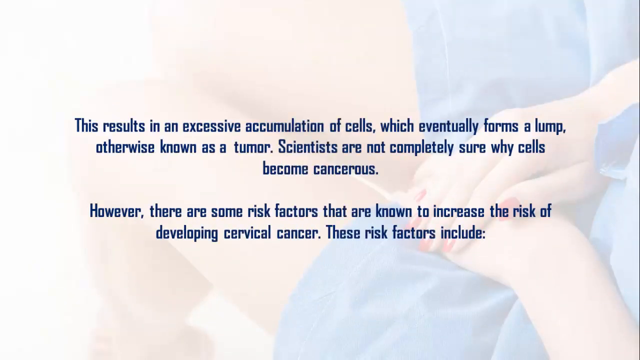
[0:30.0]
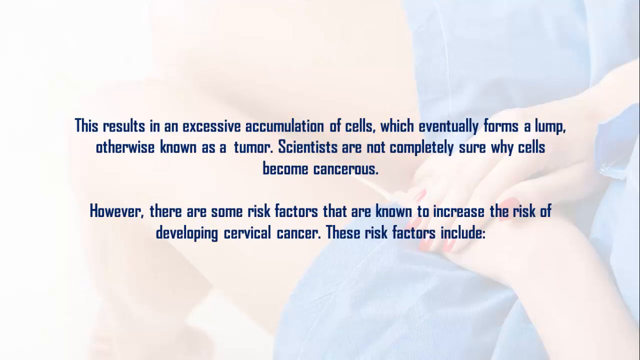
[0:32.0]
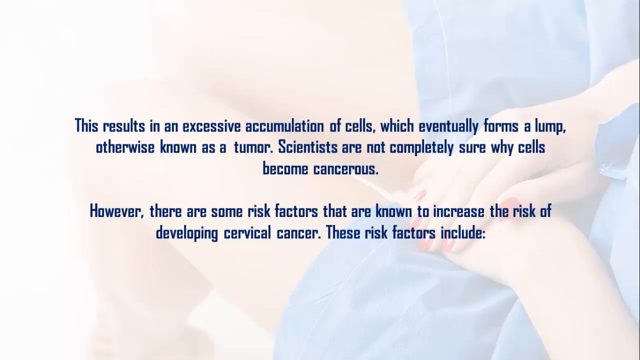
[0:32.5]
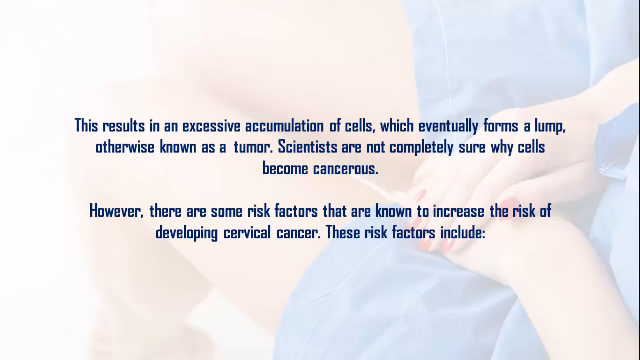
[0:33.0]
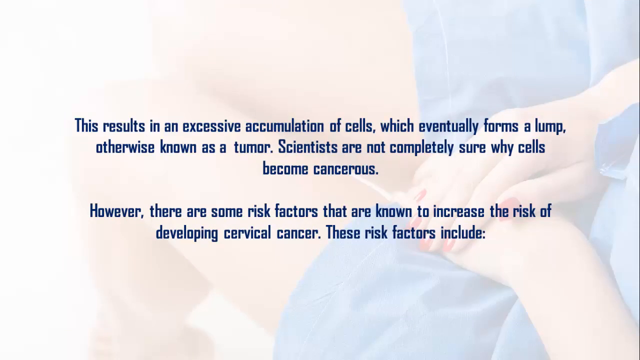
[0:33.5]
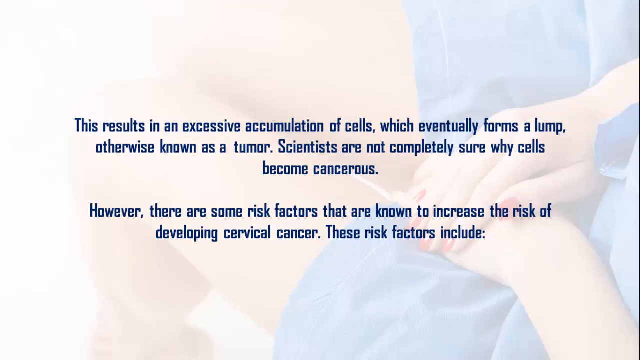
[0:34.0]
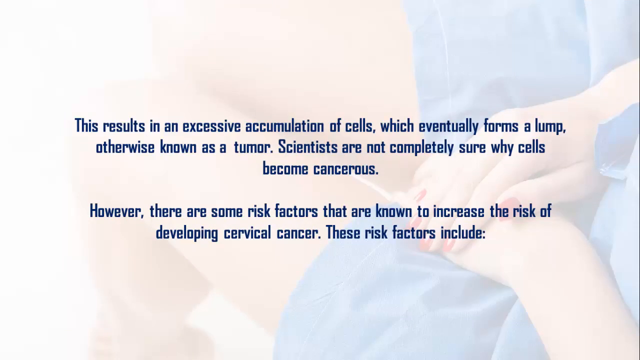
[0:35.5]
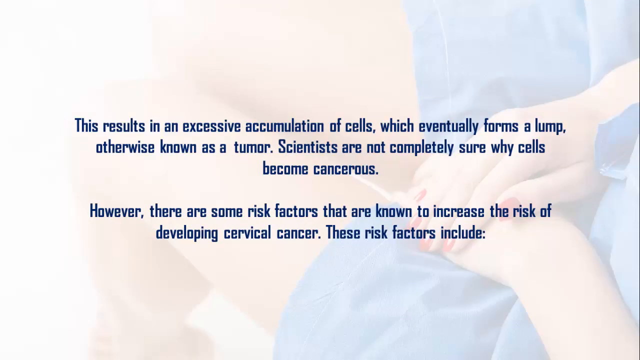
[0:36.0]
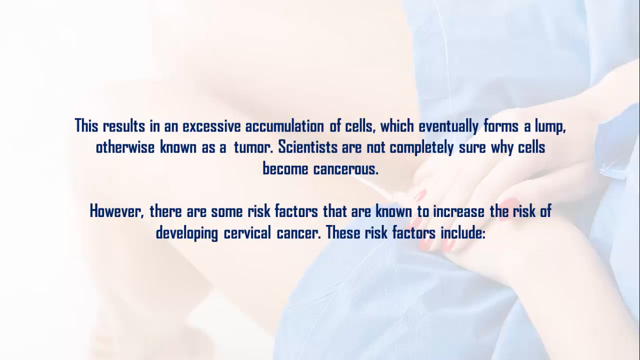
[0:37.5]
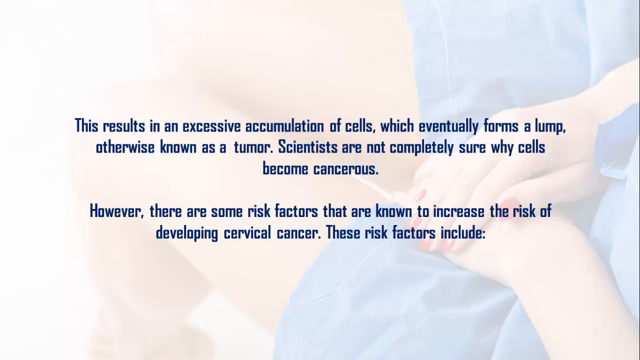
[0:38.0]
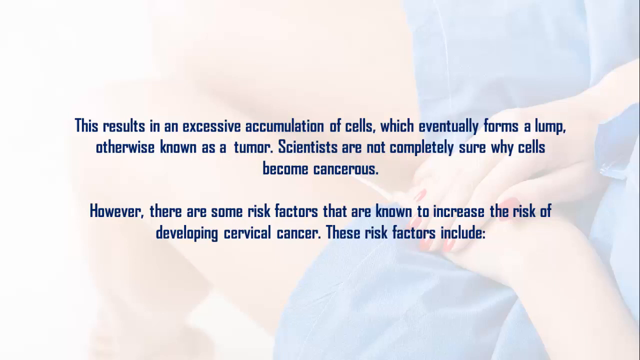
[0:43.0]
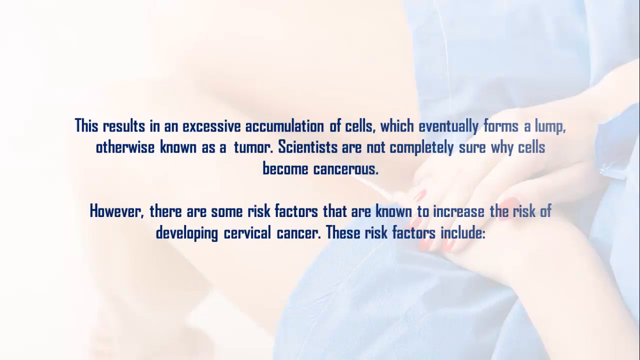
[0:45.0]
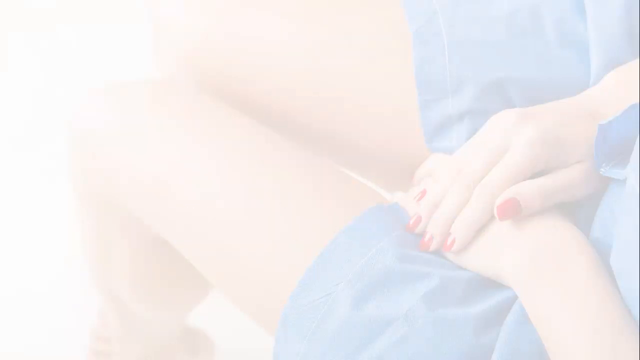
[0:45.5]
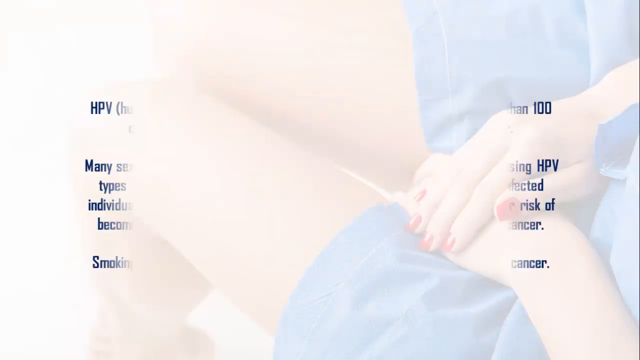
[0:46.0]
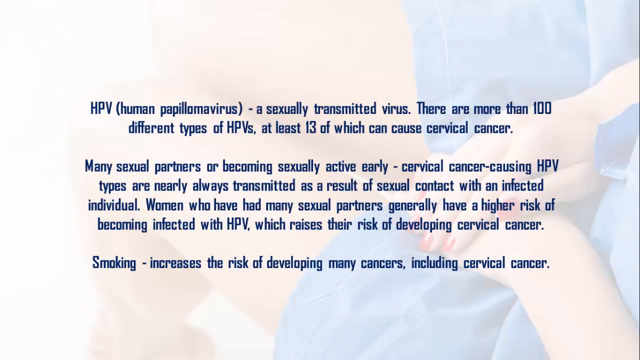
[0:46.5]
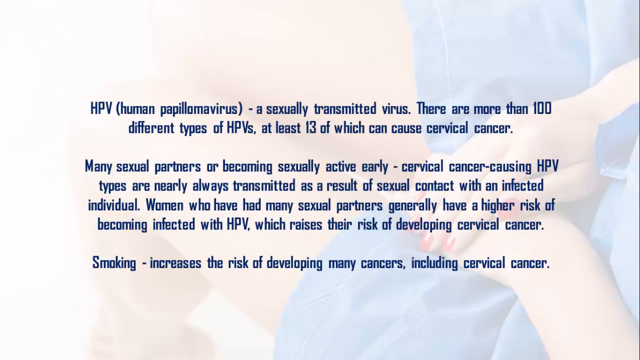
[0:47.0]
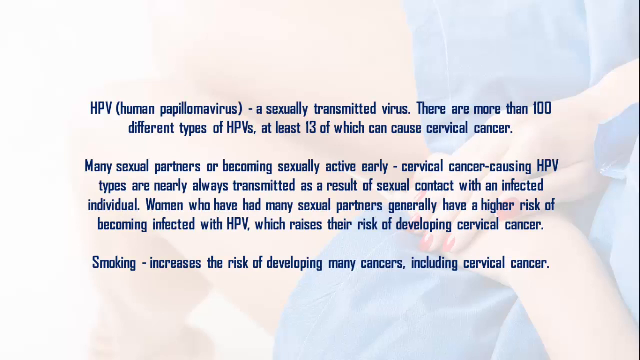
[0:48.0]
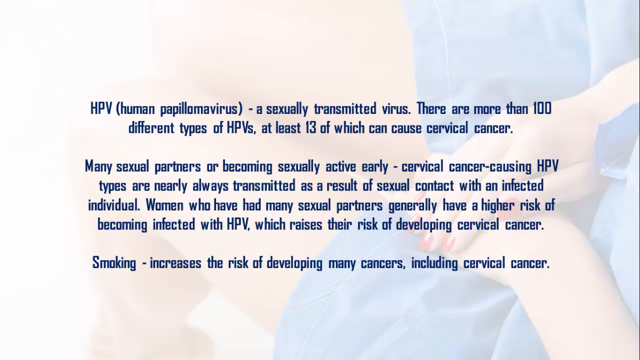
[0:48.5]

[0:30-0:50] A background image is so grayed out that it cannot be made out. Blue text, centered on the screen in two paragraphs, says: "This results in an excessive accumulation of cells, which eventually forms a lump, otherwise known as a tumor. Scientists are not completely sure why cells become cancerous. However, there are some risk factors that are known to increase the risk of developing cervical cancer. These factors include..." More text follows: "HPV (human papillomavirus), a sexually transmitted virus. There are more than 100 different types of HPVs, at least 13 of which can cause cervical cancer. Many sexual partners are becoming sexually active early. Cervical cancer causing HPV types are nearly always transmitted as a result of sexual contact with an infected individual. Women who have had many sexual partners generally have a higher risk of becoming infected with HPV, which raises their risk of developing cervical cancer. Smoking increases the risk of developing many cancers, including cervical cancer."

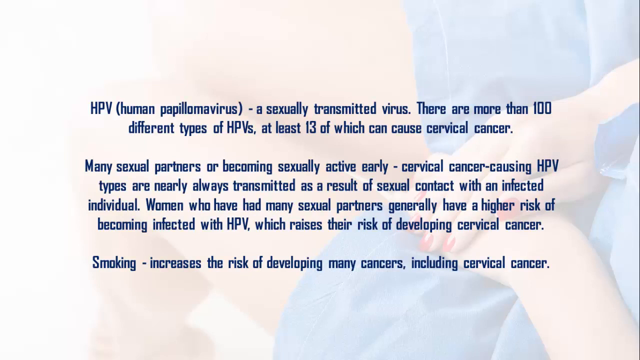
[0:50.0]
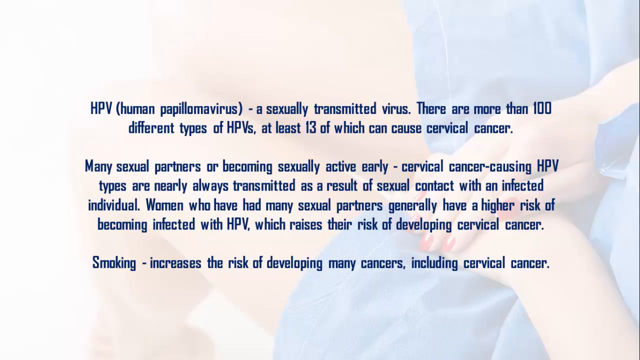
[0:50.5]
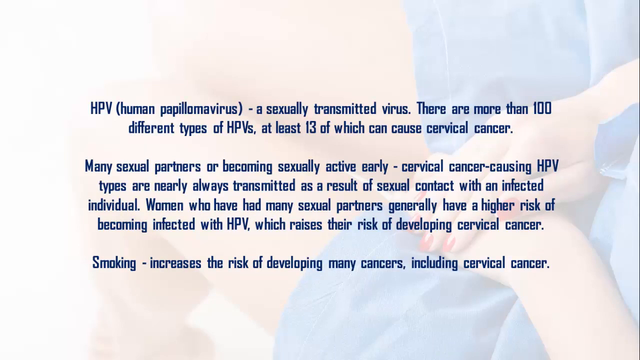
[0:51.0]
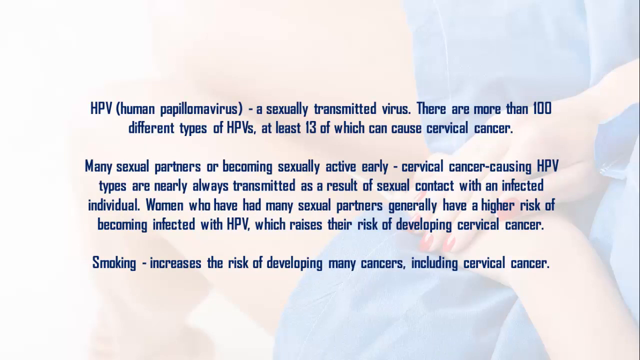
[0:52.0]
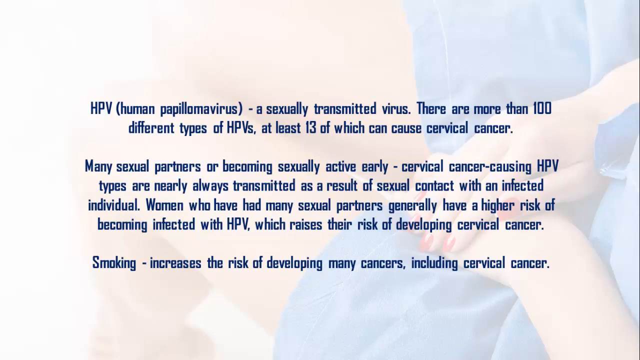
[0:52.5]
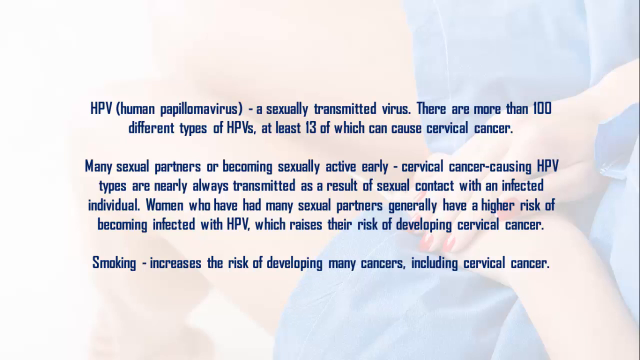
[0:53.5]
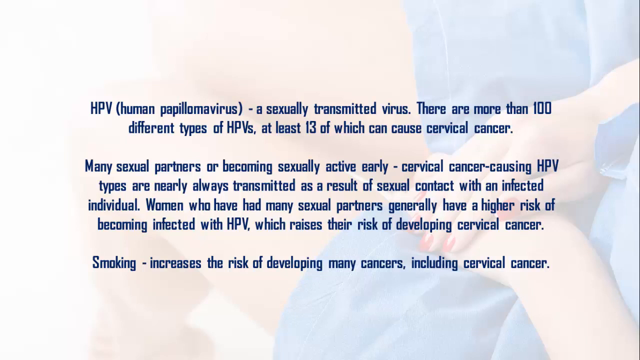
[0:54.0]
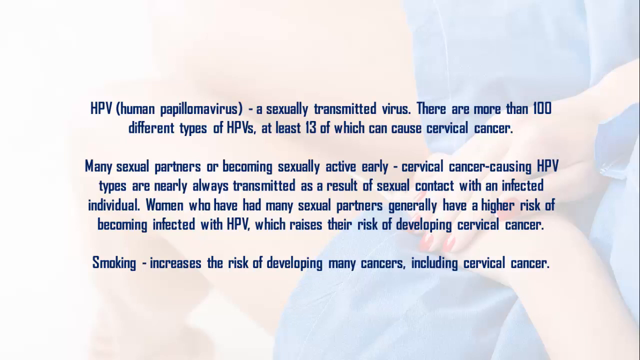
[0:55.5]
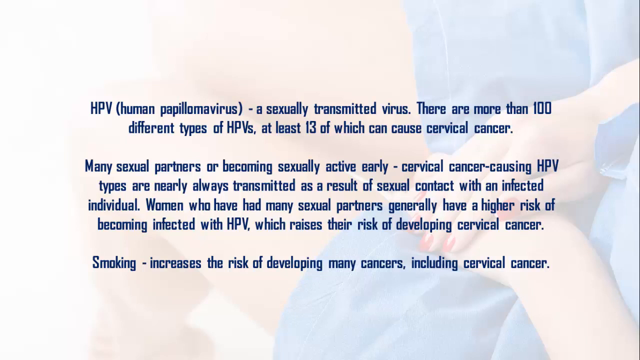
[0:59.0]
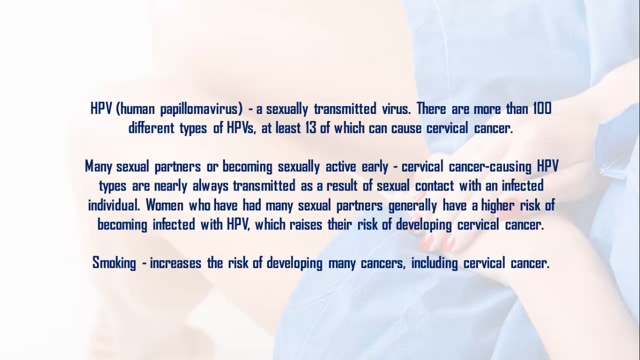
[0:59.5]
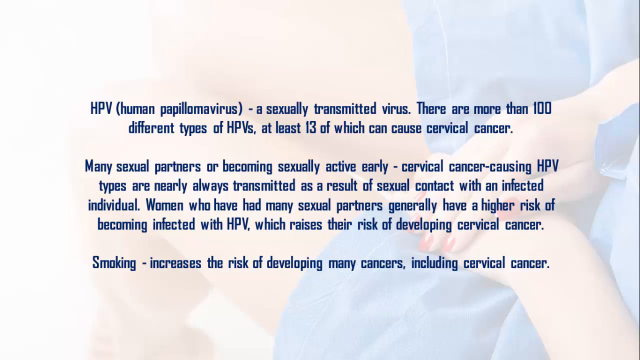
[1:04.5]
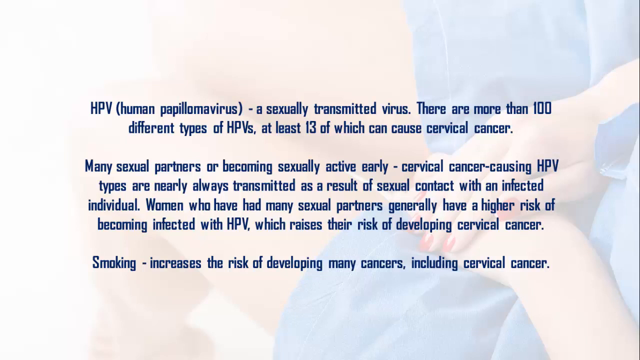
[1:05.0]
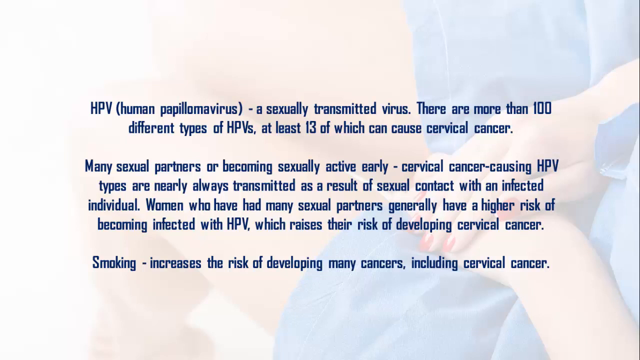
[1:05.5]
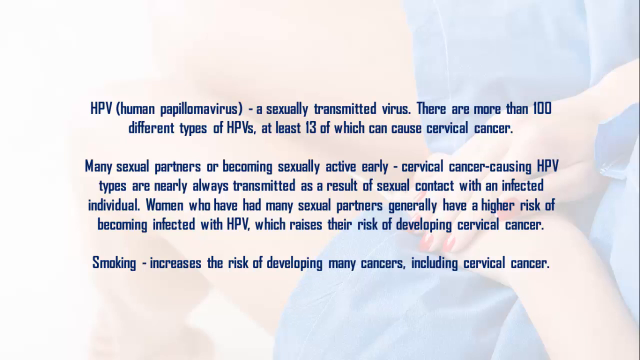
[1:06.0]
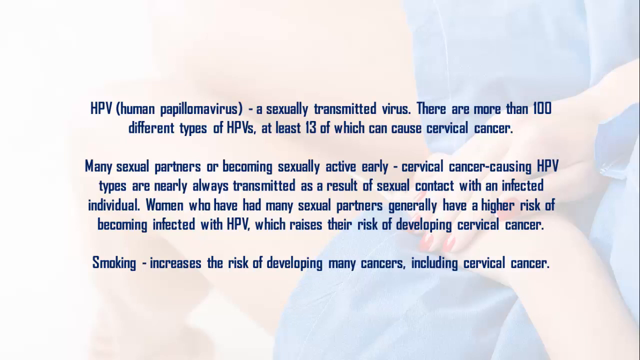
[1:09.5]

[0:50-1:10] Text on the screen reads: "Human papillomavirus, a sexually transmitted virus. There are more than 100 different types of HPVs, at least 13 of which can cause cervical cancer. Many sexual partners becoming sexually active early, cervical cancer causing HPV types are nearly always transmitted as a result of sexual contact with an infected individual. Women who have had many sexual partners generally have a higher risk of becoming infected with HPV, which raises their risk of developing cervical cancer. Smoking increases the risk of developing many cancers, including cervical cancer." The text is in three paragraphs in a dark blue font, centered on the screen. The background is still difficult to see, but it looks like a woman, maybe wearing a nightgown that goes down to about her mid-thigh, with her hands in her lap, one over the other, and what looks like red-painted fingernails.